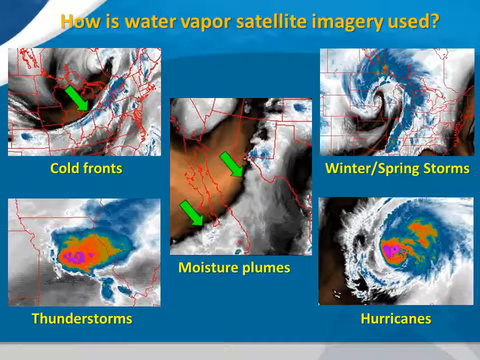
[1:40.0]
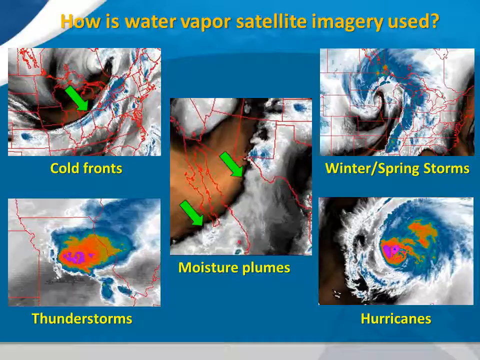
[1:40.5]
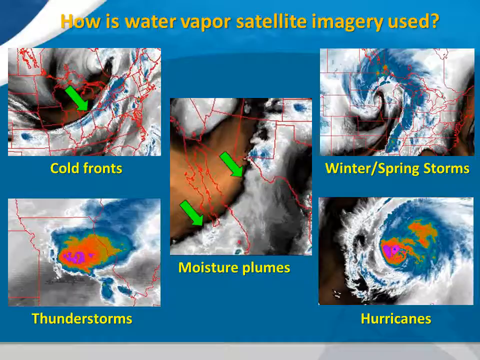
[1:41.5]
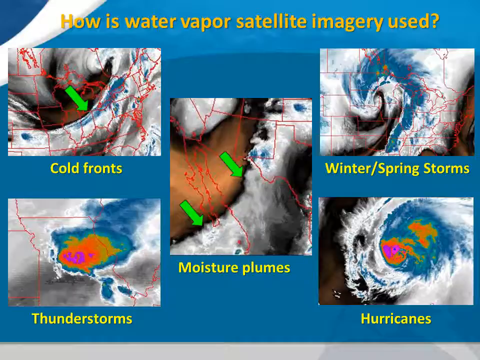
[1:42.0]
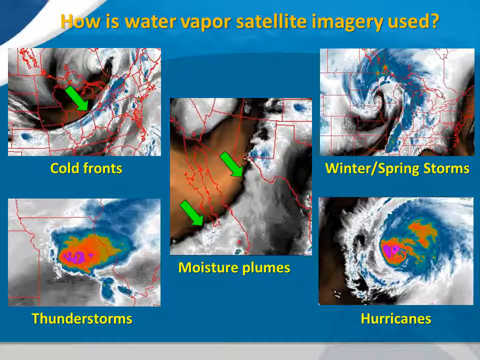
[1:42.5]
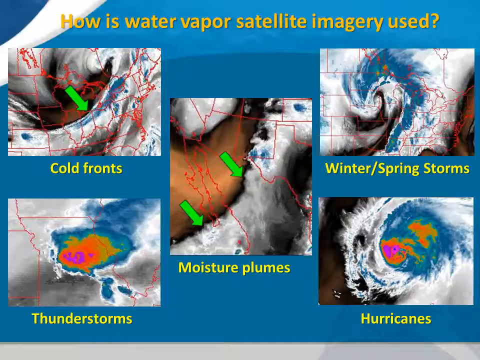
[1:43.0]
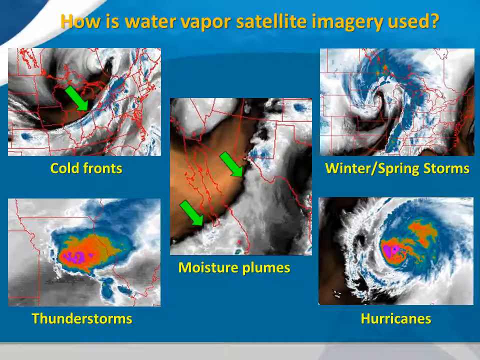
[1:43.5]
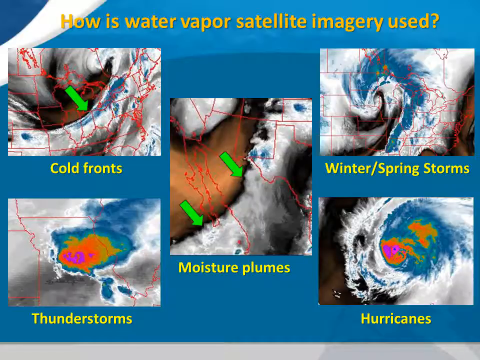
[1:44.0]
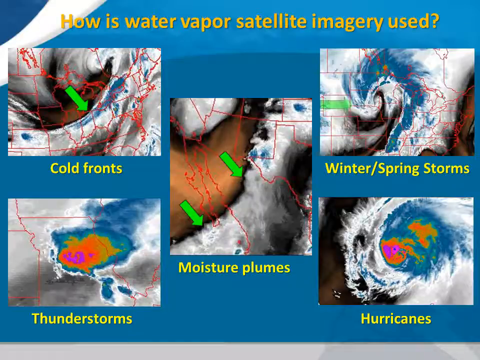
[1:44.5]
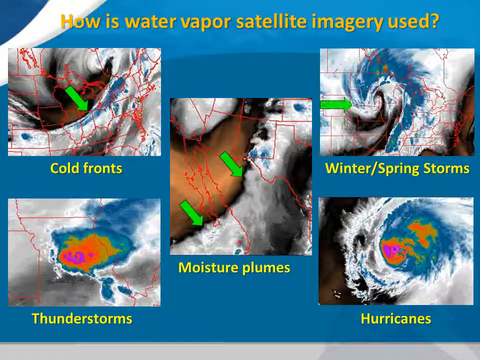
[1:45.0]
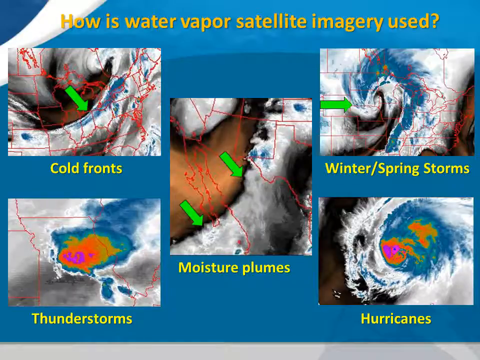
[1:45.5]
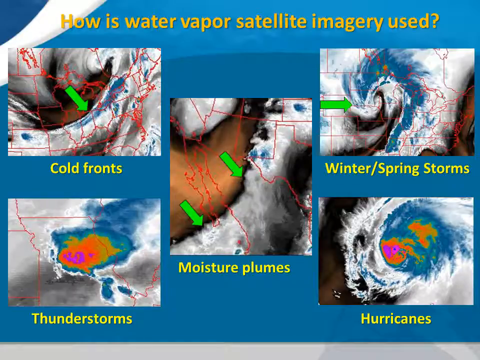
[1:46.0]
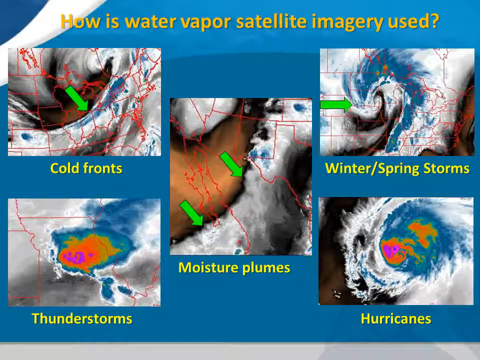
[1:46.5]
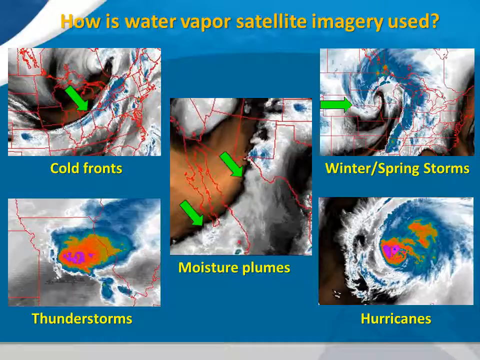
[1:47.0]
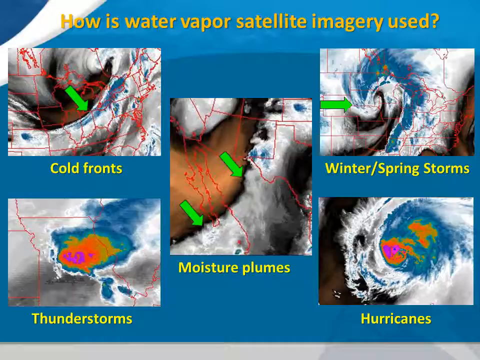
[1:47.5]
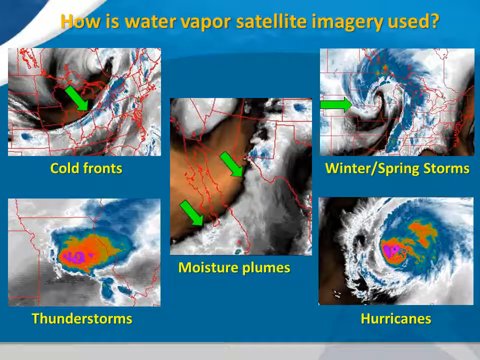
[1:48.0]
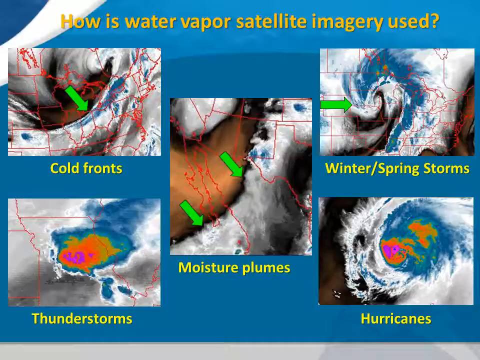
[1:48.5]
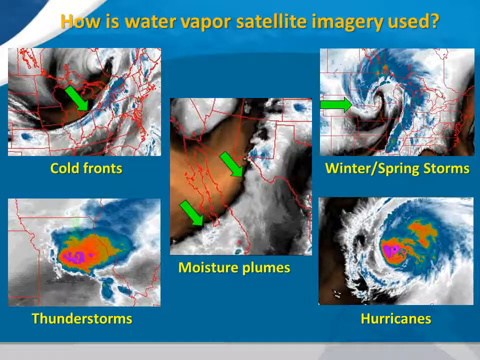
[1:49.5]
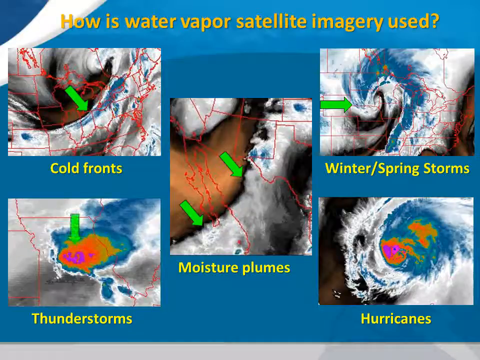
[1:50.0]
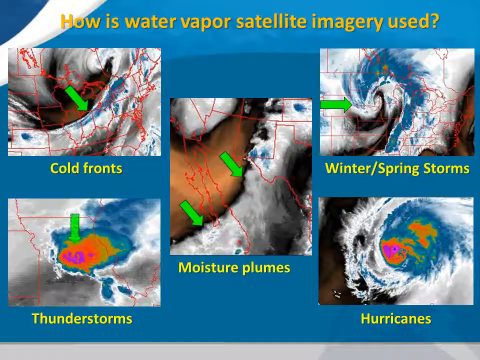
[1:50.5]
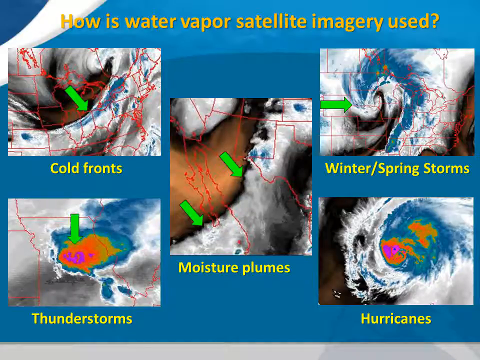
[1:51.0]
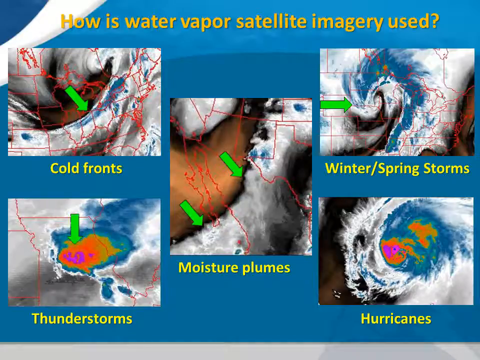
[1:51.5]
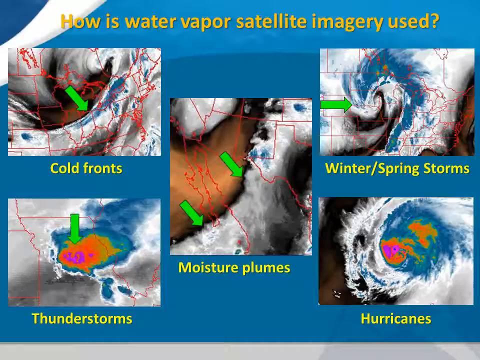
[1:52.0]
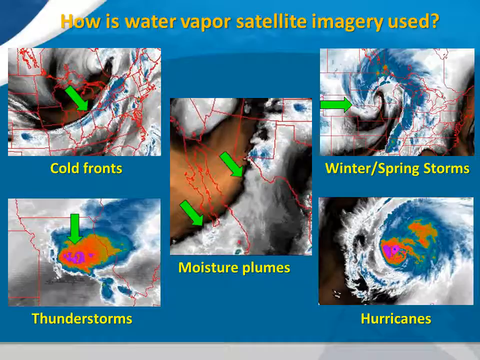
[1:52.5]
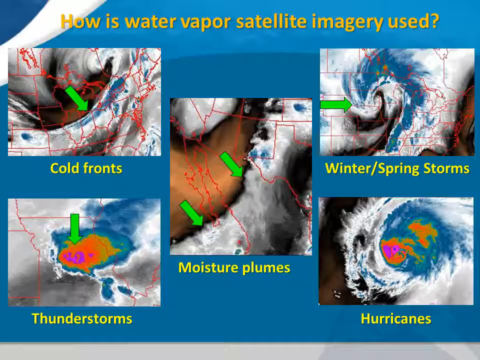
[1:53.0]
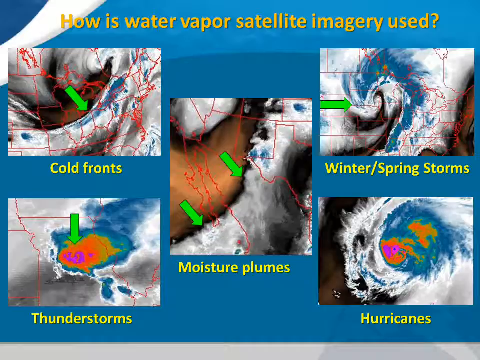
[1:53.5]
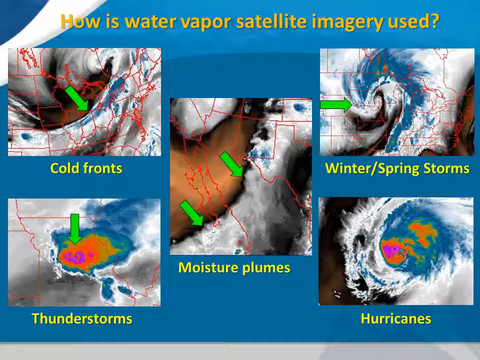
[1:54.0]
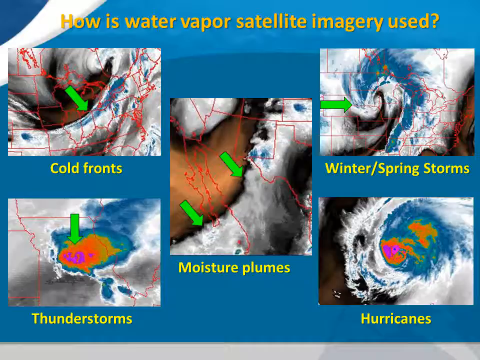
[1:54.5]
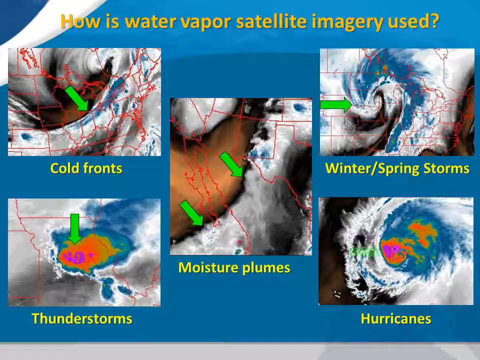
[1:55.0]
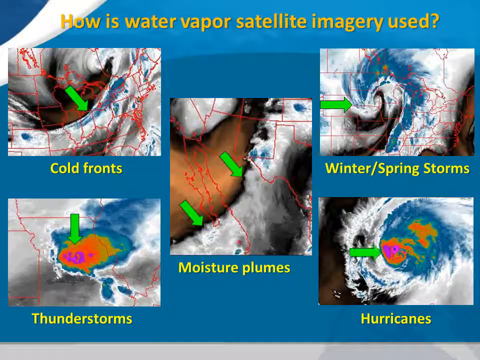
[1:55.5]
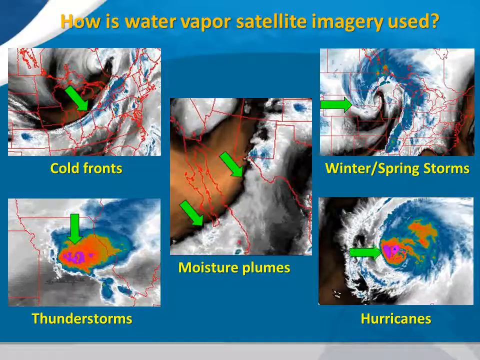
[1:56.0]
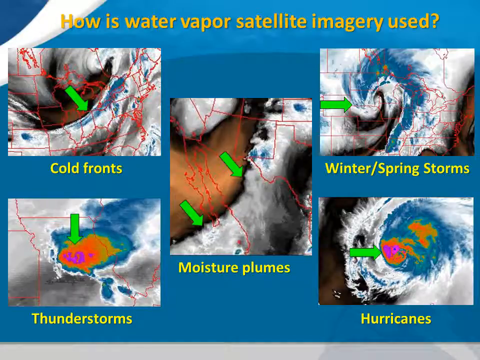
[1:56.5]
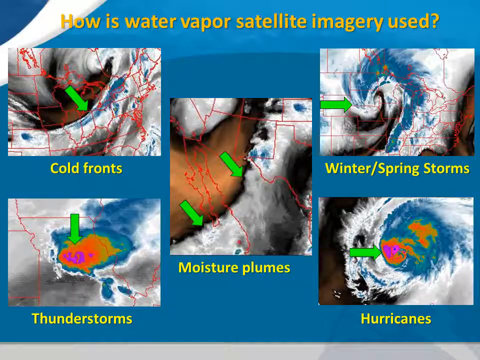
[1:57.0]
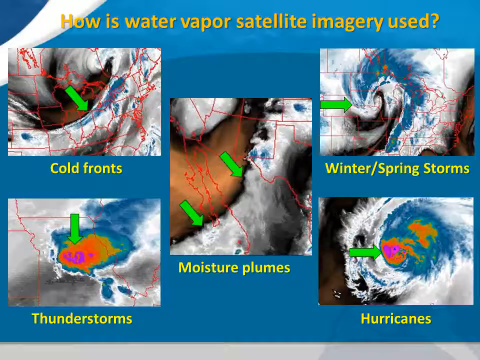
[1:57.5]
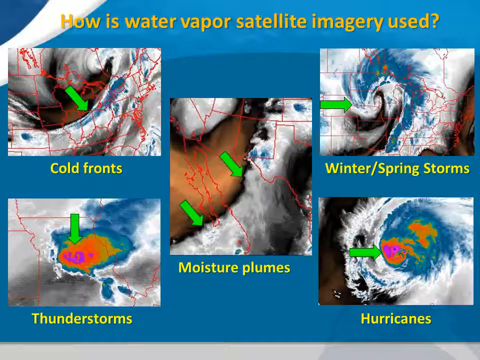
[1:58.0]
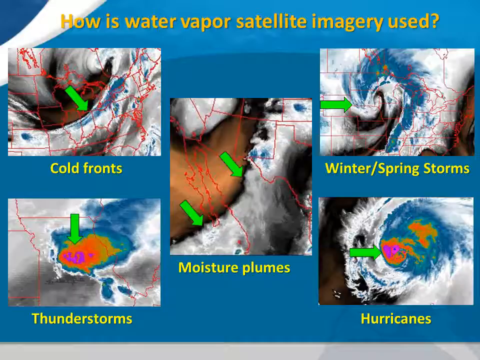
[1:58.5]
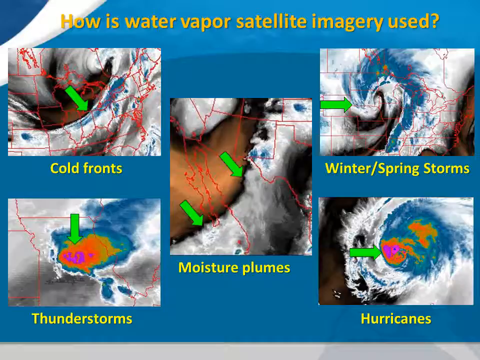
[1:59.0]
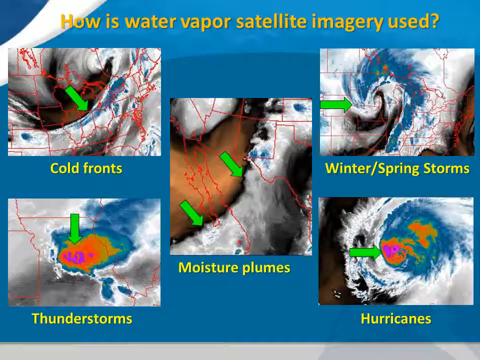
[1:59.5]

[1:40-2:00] The background is light blue. In the top left corner is something that looks similar to NOAA imagery, but it is not fully visible. Yellow text at the top reads "how is water vapor satellite imagery used?" At the top left is a map of the Northeast United States with the states depicted in red lines and a green arrow in the center of the image pointing southeast; below it, yellow text reads "cold fronts." Below that, at the bottom left, is a picture of what appears to be Iowa, perhaps, though it is hard to tell because the whole state is not visible; cloud imagery over it shows dark blue, light blue, green, yellow, orange, red, and purple, and yellow text below reads "thunderstorms." A center image shows the southwestern United States, with two green arrows over Mexico pointing southeast, and yellow text below reads "moisture plumes."